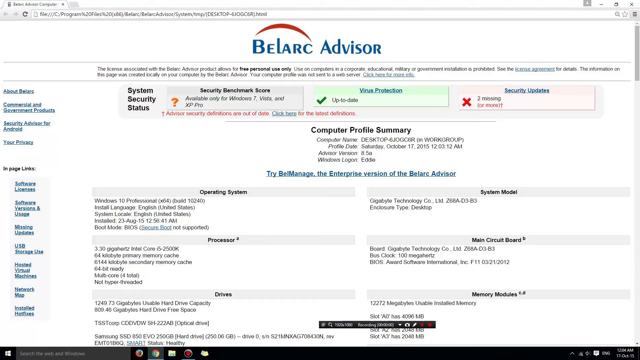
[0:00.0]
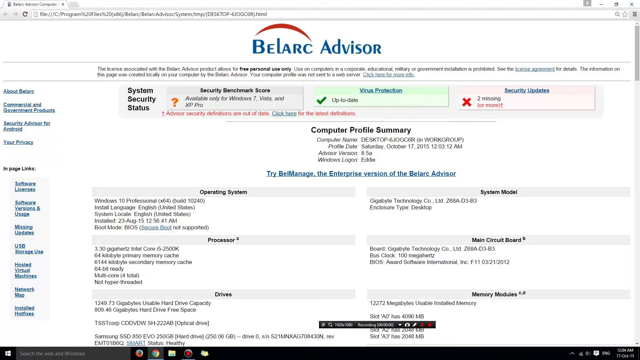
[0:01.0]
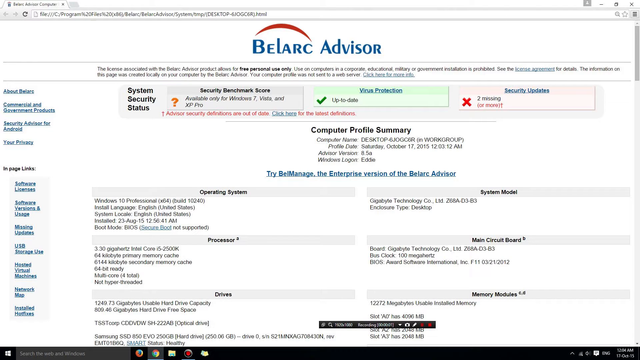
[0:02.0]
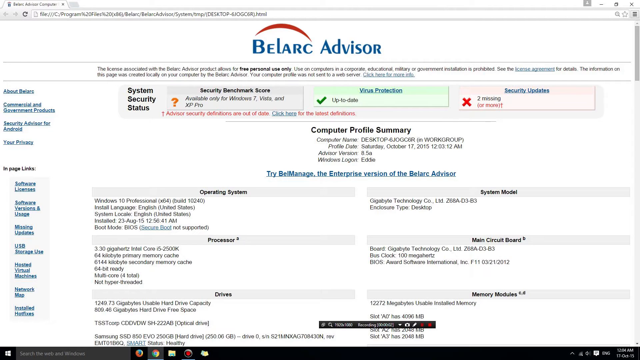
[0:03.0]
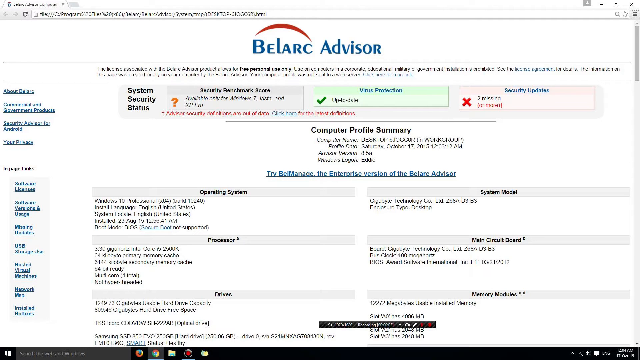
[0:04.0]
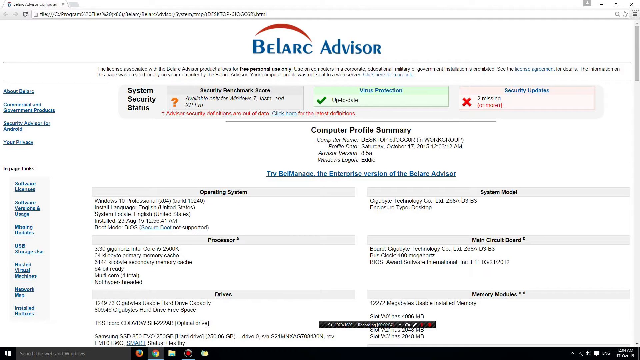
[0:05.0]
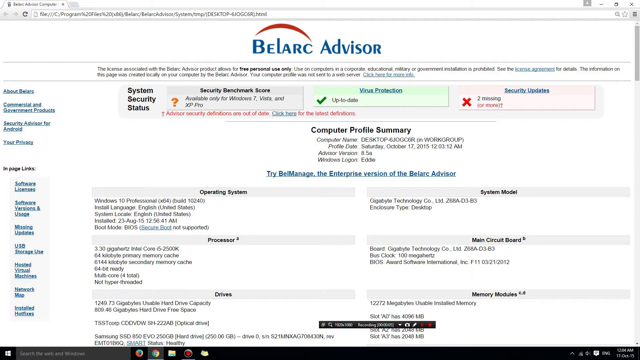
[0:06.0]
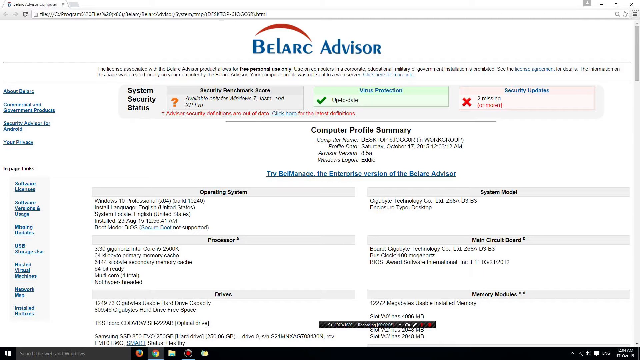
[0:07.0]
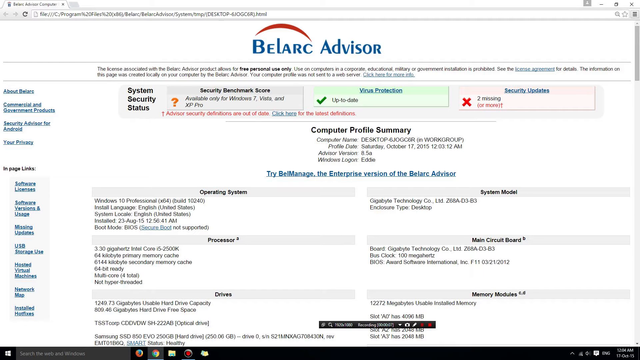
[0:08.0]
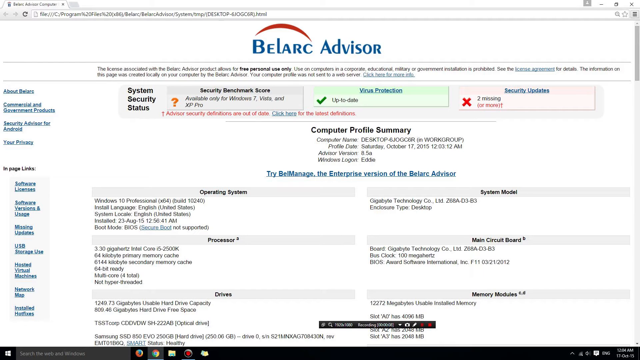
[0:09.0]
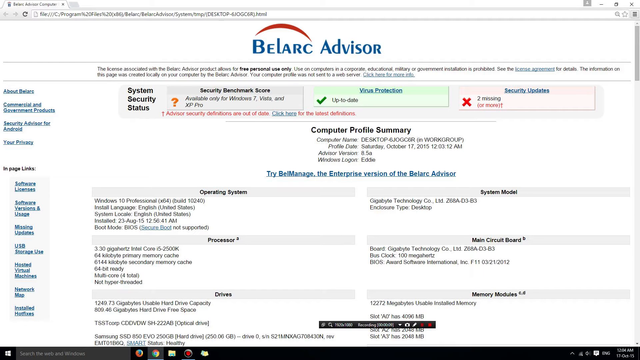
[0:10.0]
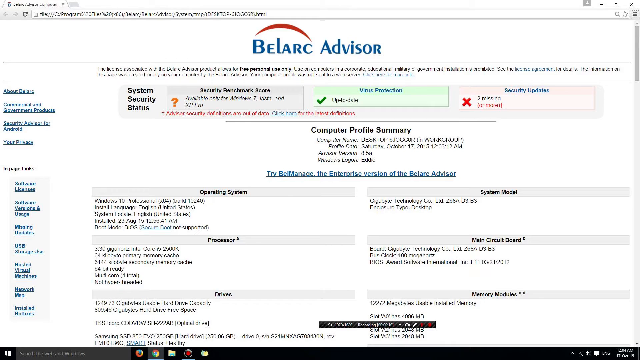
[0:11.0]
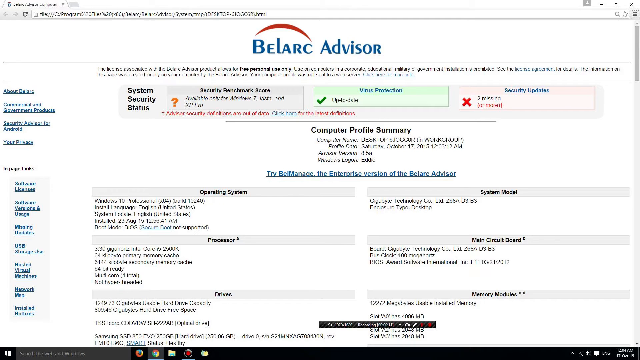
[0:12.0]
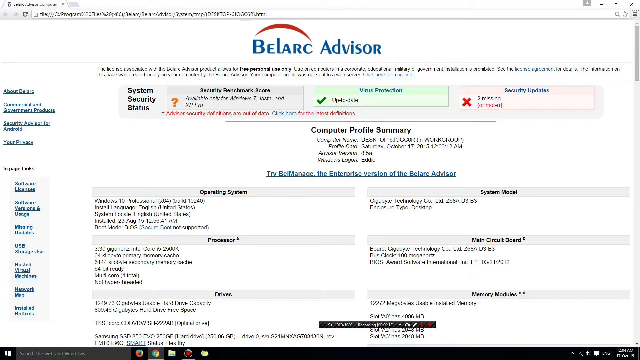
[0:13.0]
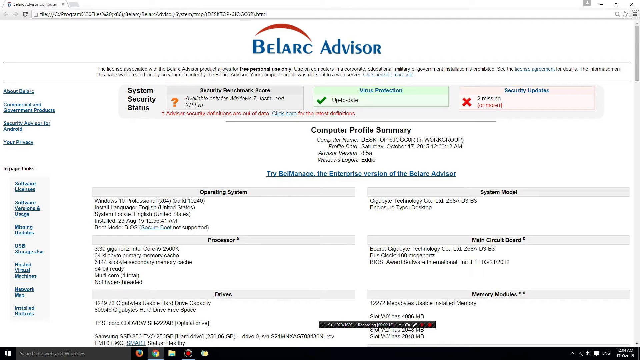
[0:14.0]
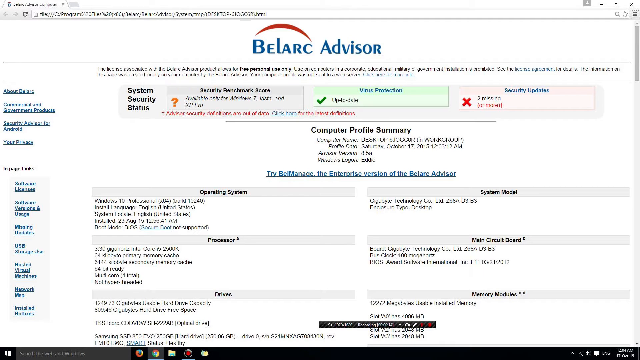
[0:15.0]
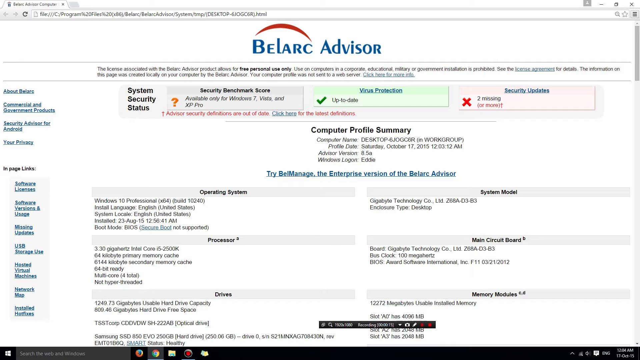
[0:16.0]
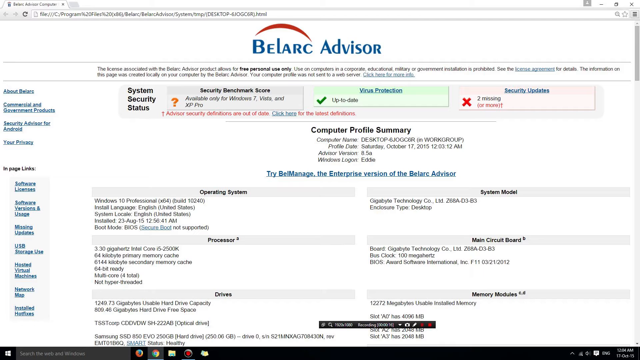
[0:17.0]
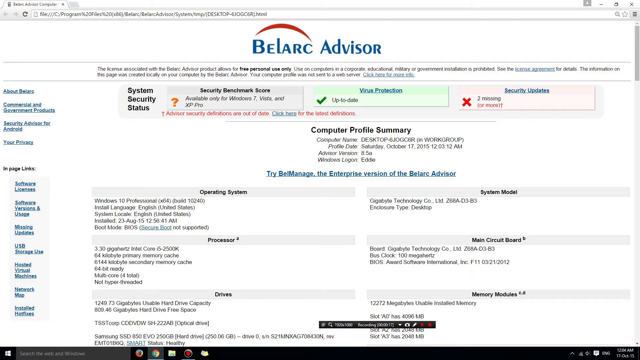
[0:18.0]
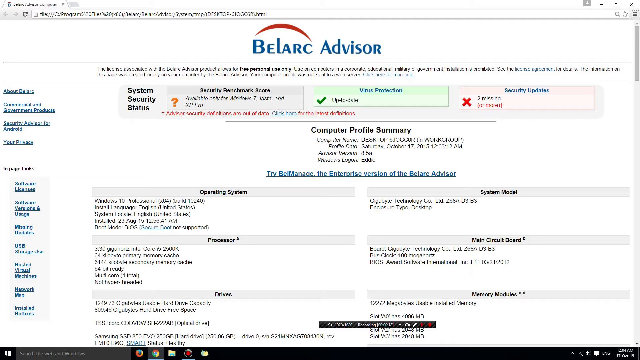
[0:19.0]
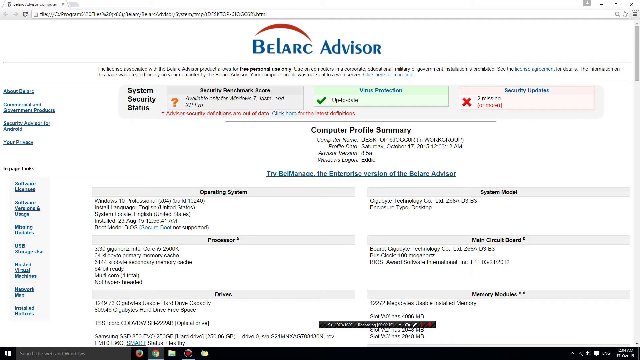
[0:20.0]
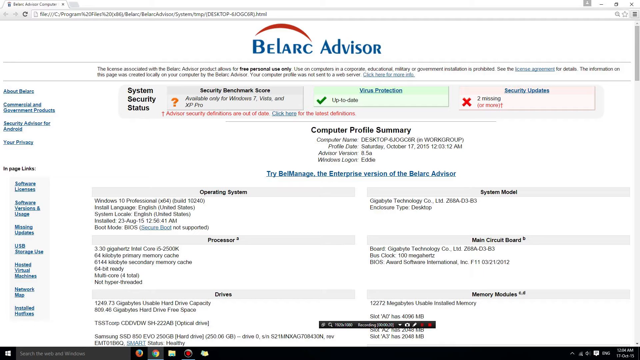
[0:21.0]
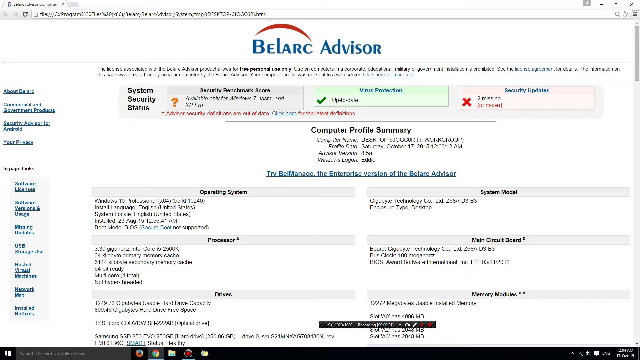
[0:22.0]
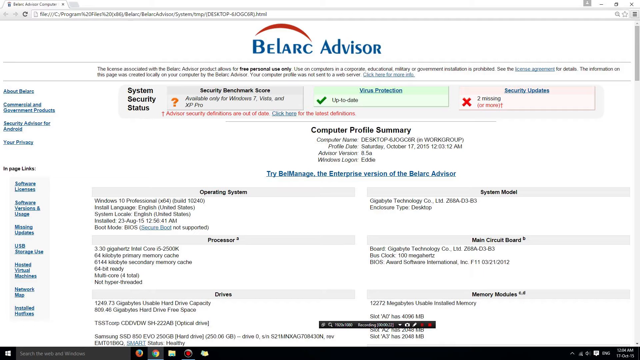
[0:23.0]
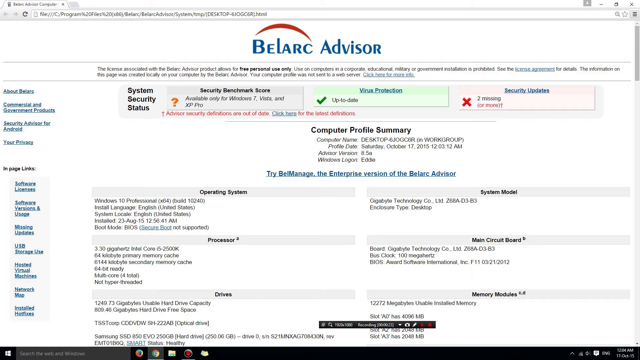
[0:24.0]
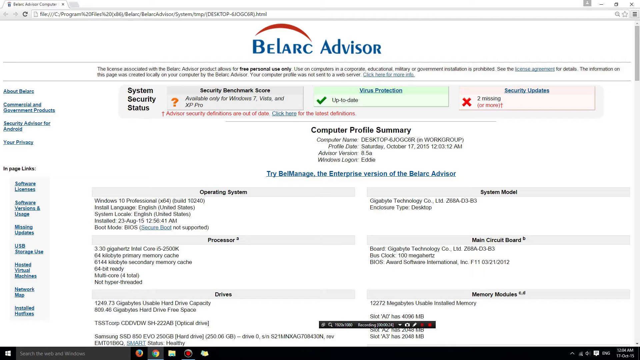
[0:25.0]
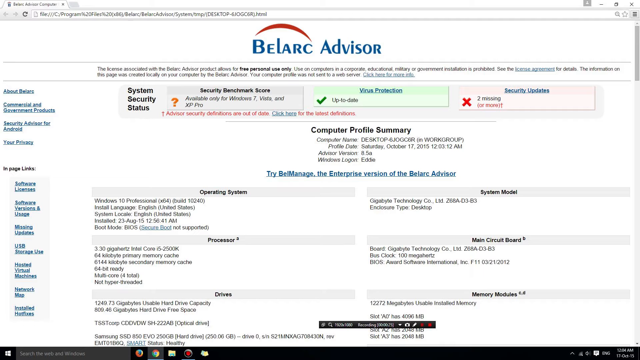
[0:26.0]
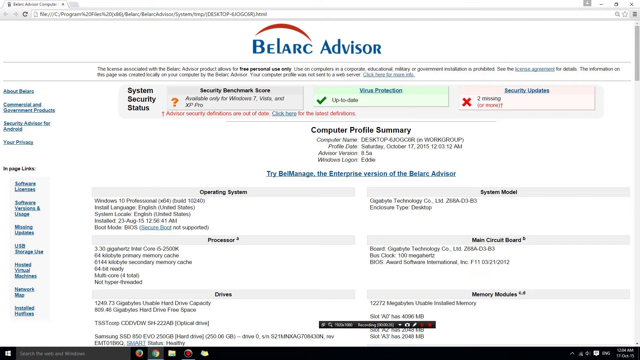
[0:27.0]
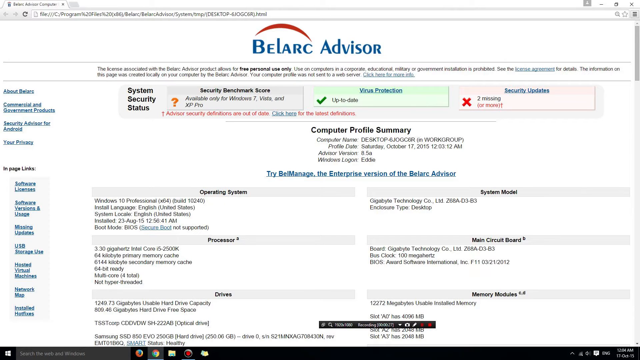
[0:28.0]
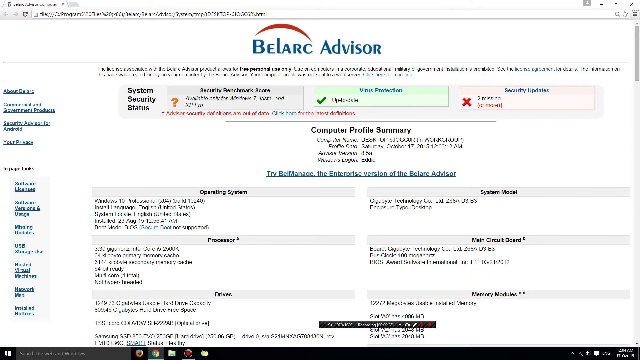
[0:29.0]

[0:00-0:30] A screen recording shows a Windows web page whose title logo reads Beelark Advisor. The page has a white background and a lot of text; the Beelark Advisor logo is in blue text with a red arch from the B to the C. One main tab reads System Security Status, with Security Benchmark Score, Virus Protection and Security Updates. Below it is a computer profile summary listing the computer name, the profile date, the Advisor version and the Windows logon username, along with information about the computer's operating system, system model, processor, connected drives, memory modules and main circuit board. All of this information is in black text on the white background. On the left-hand side of the page are links in blue font, indicating they are clickable; these links lead to information about Beelark and other licenses available for purchase.